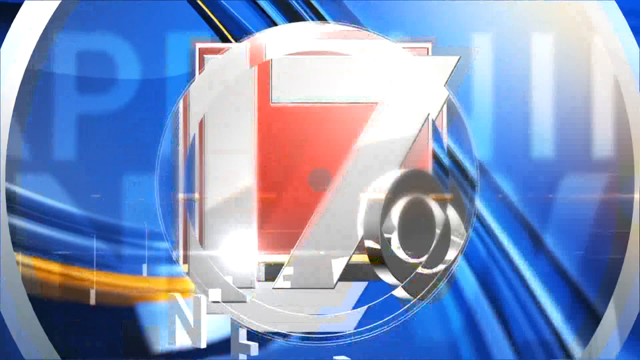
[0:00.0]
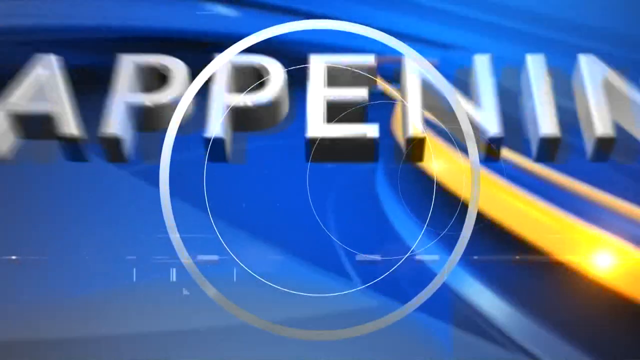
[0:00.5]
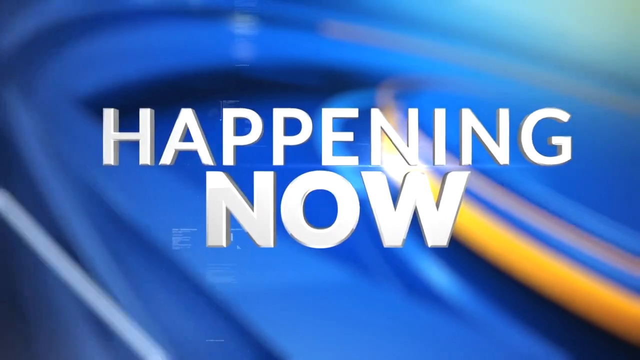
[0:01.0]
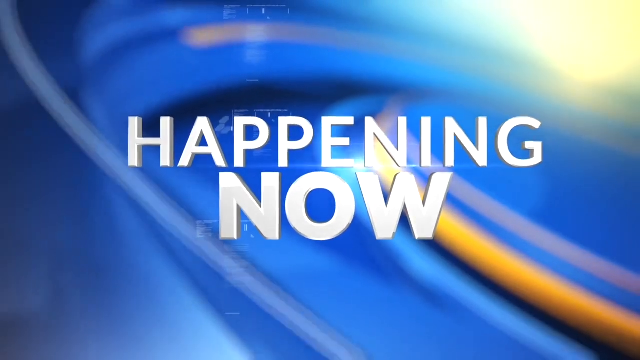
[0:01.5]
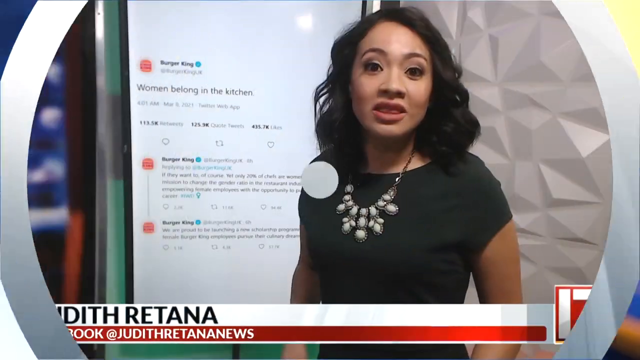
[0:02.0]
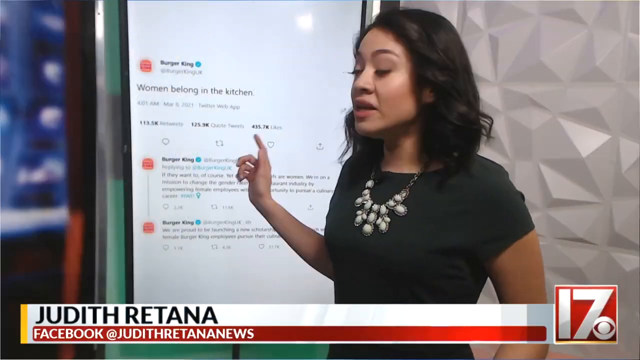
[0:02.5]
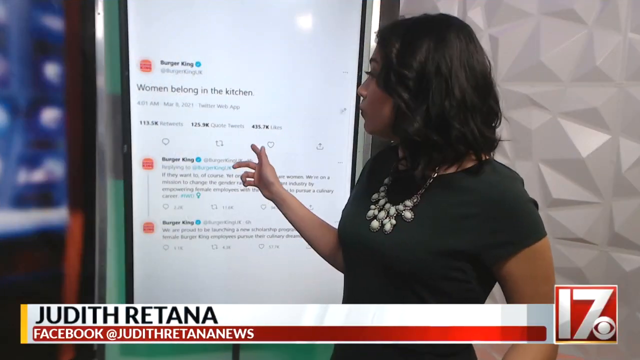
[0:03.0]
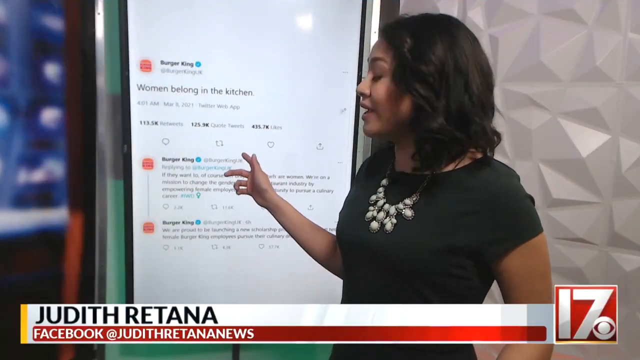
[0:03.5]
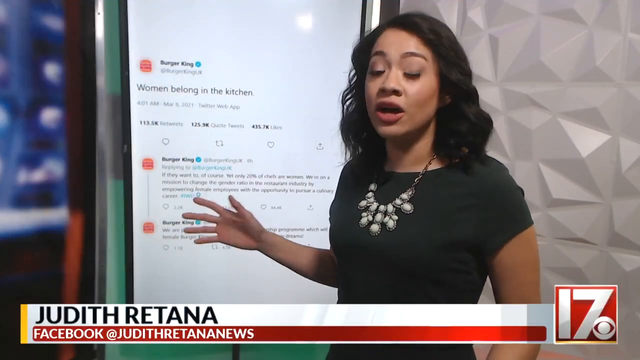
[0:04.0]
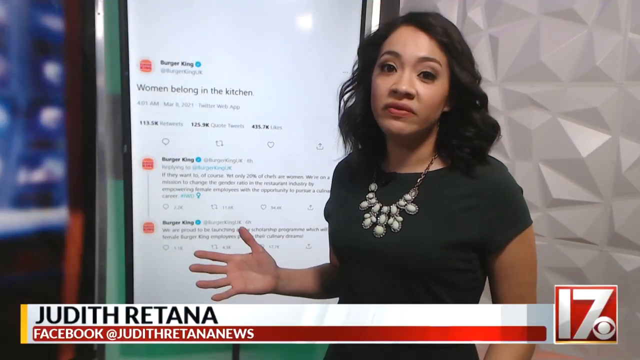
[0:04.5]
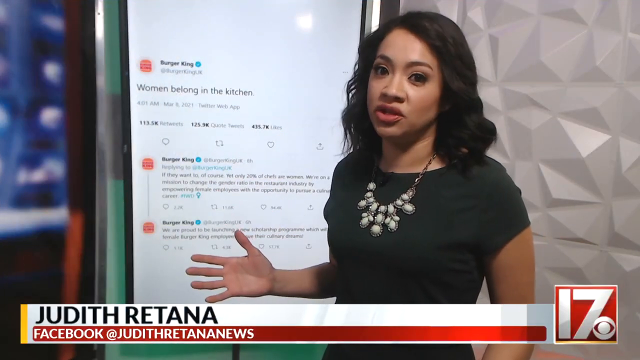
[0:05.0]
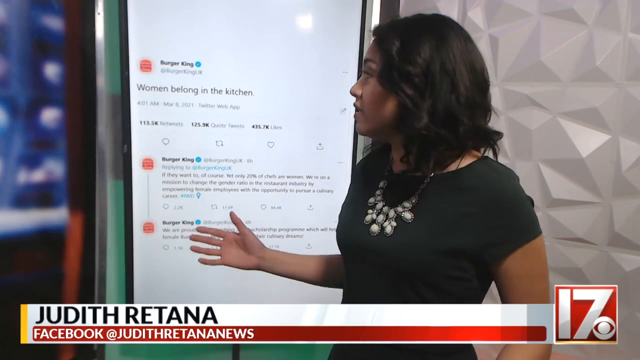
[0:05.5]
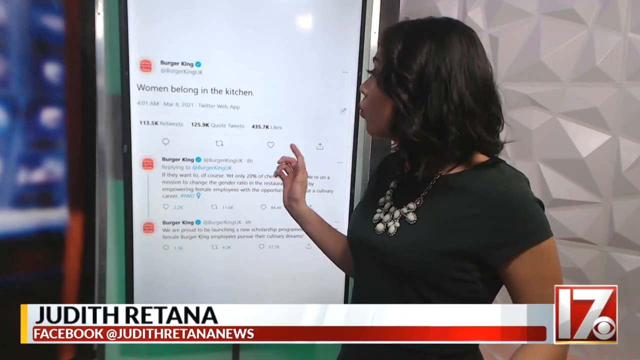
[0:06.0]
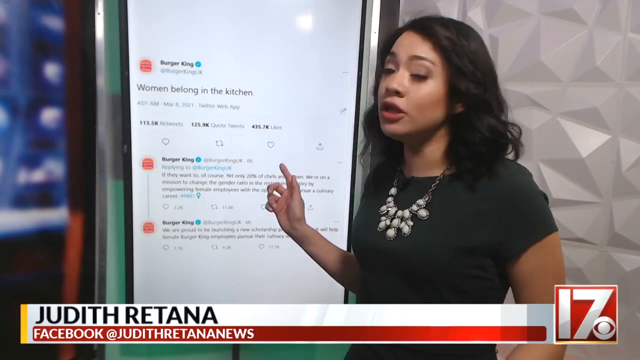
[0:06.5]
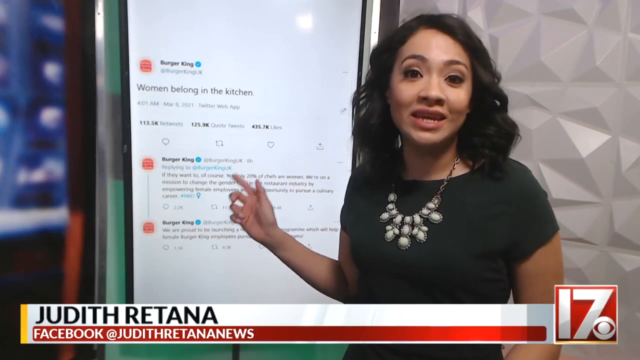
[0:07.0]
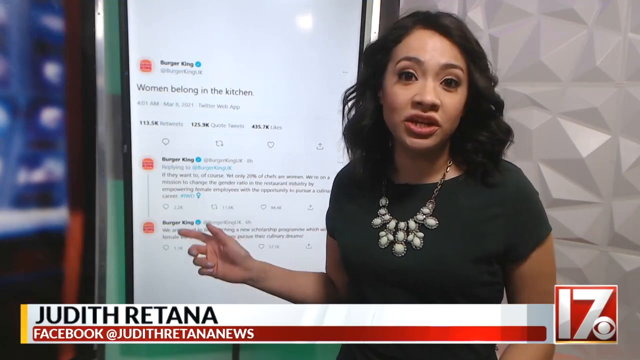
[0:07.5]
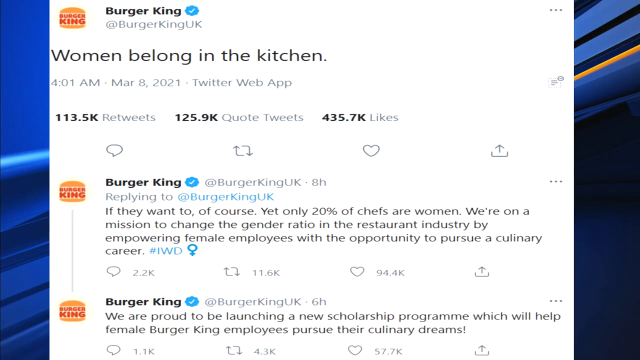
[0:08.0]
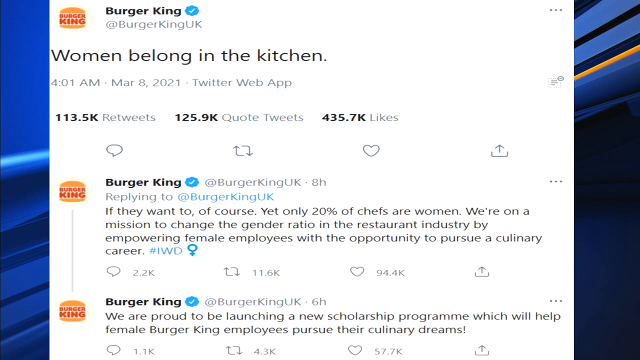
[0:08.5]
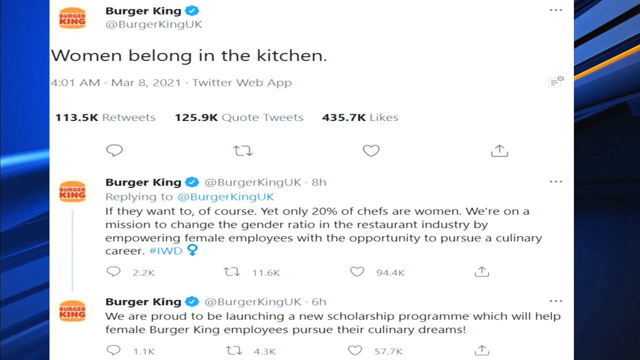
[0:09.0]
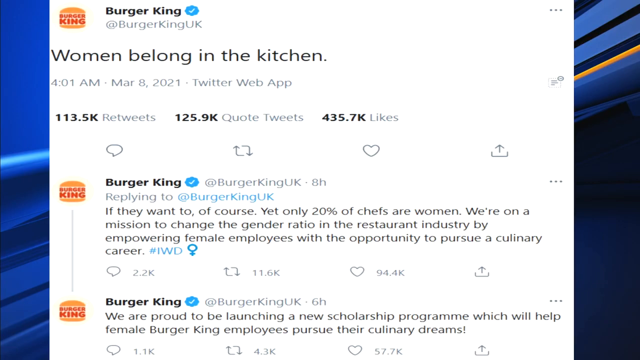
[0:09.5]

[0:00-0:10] The video appears to be a news broadcast, and it immediately goes to footage of a woman with short hair who wears a necklace and a short-sleeved black shirt. Behind her there appears to be a monitor showing a tweet from Burger King about women in the kitchen, with roughly 100,000 retweets and two Burger King replies. The woman's name appears to be Shruti Retana, and the broadcast name appears to be i7 from Facebook. She appears to be looking to her right, with the screen behind her, while remaining in view of the camera, and her background looks like a news station.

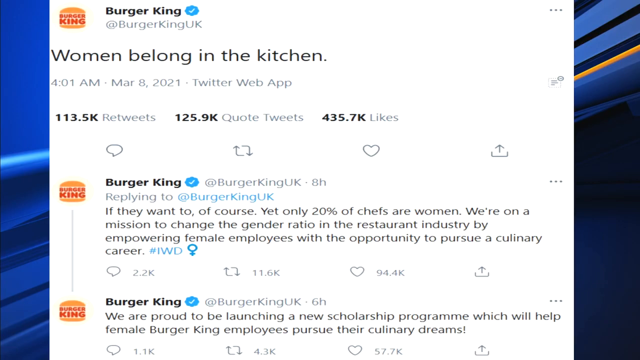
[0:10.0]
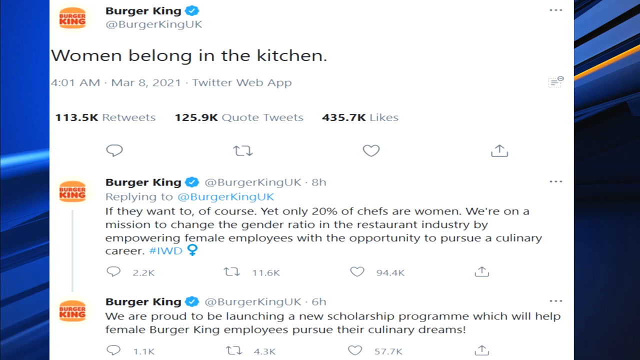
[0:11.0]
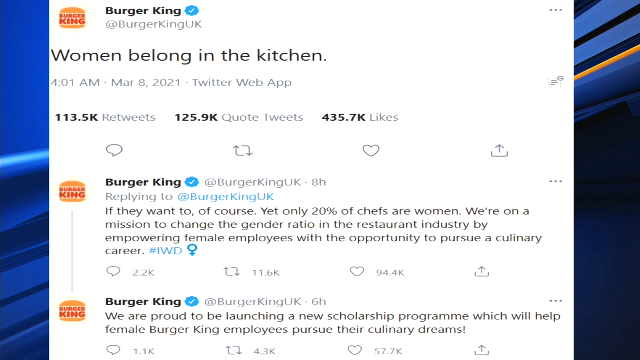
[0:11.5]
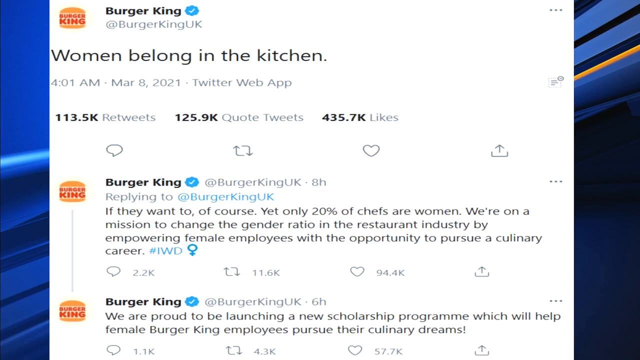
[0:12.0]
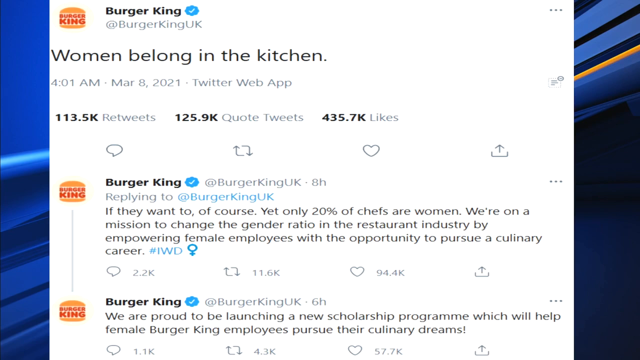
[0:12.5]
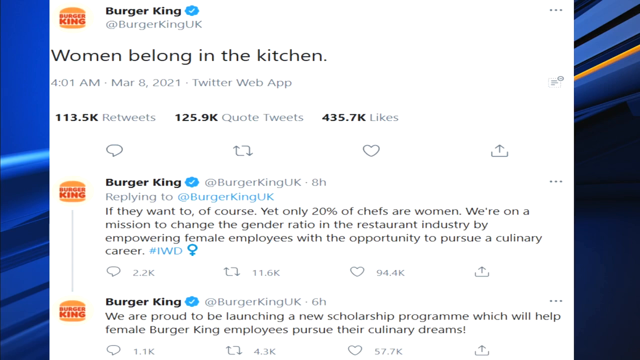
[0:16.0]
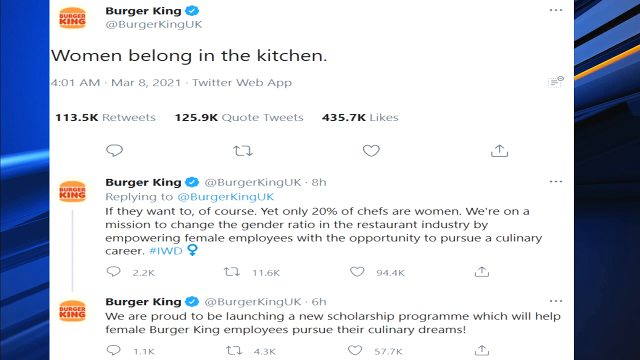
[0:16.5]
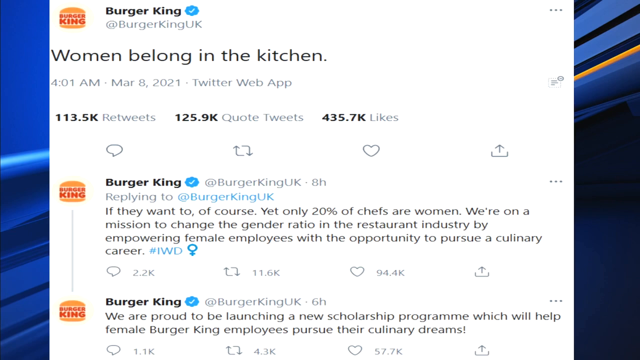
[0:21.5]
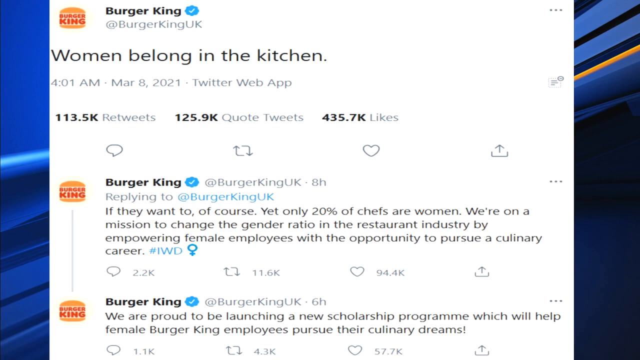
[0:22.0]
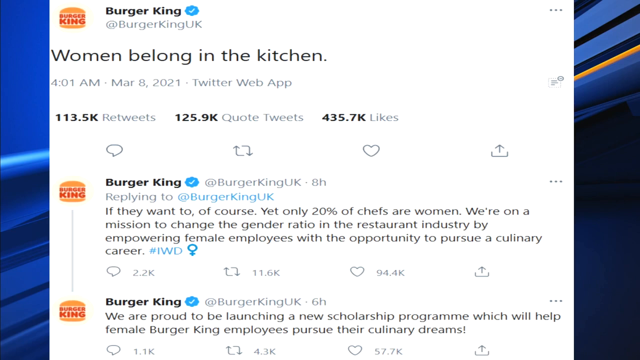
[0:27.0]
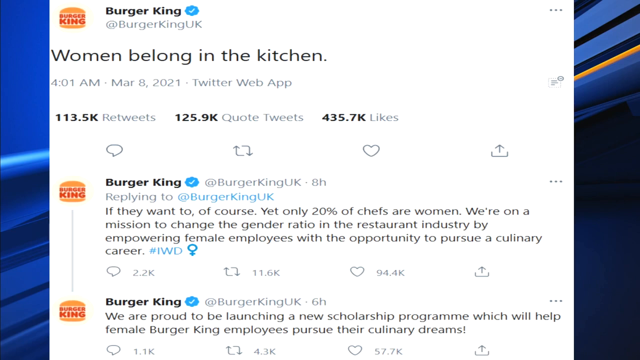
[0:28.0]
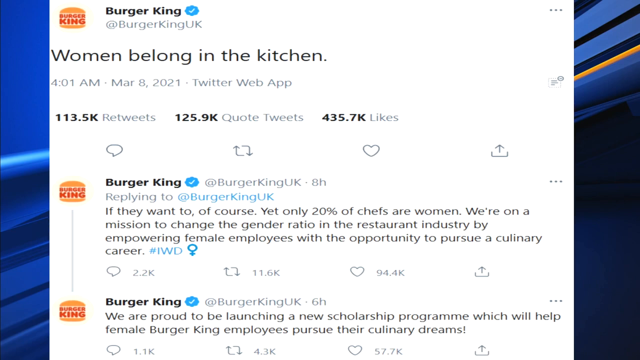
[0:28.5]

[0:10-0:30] The tweet is shown in close-up. It was made by Burger King UK, whose page is verified. The tweet appears to have been made on March 8th, 2021, and on the Twitter web app it shows 435 likes, 125,000 quotes and 113,000 retweets. A couple of replies follow from six hours ago. The first reads "if they want to, of course, they could. Yet only 20% of chefs are women." Another reply below it doubles down. News wallpaper is visible in the background, and the tweet appears to have been made at 4:01 a.m. by Burger King UK.